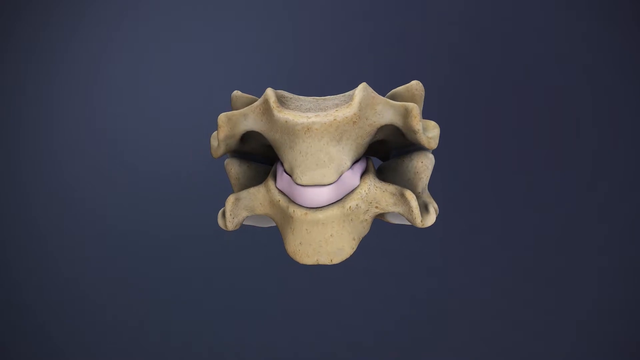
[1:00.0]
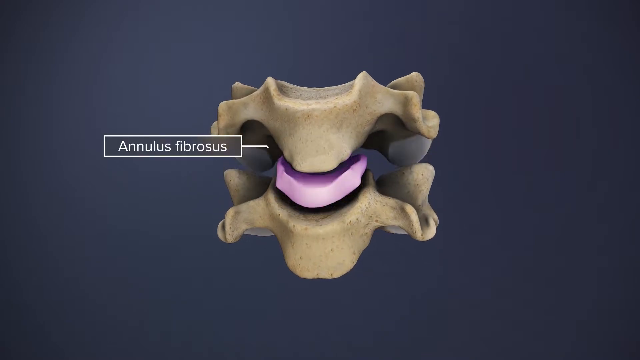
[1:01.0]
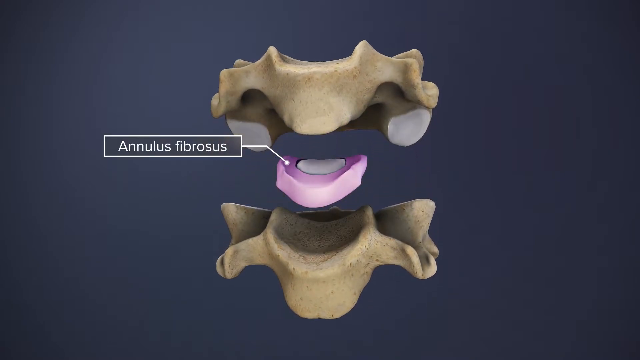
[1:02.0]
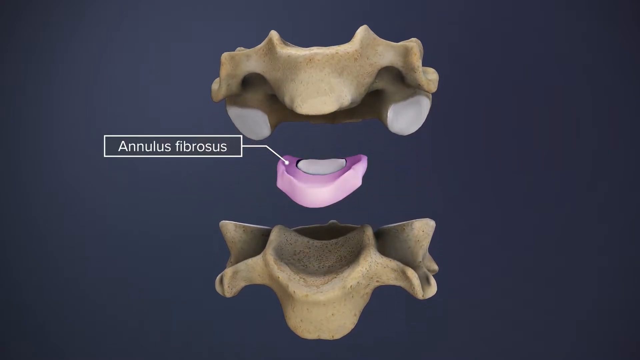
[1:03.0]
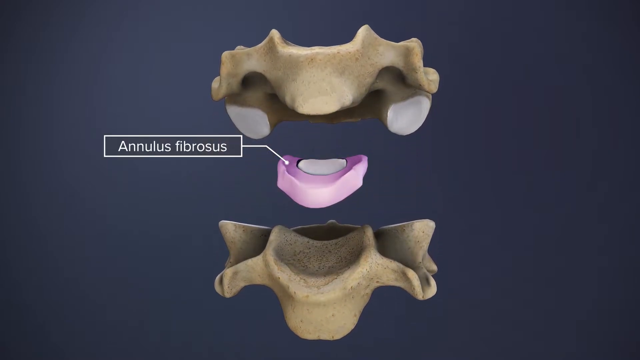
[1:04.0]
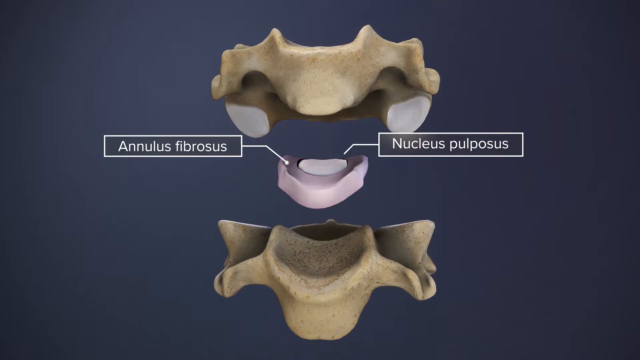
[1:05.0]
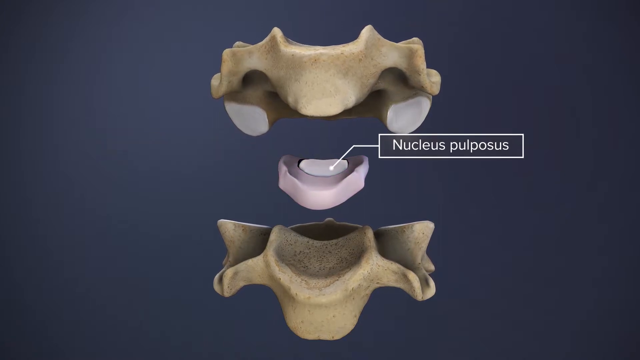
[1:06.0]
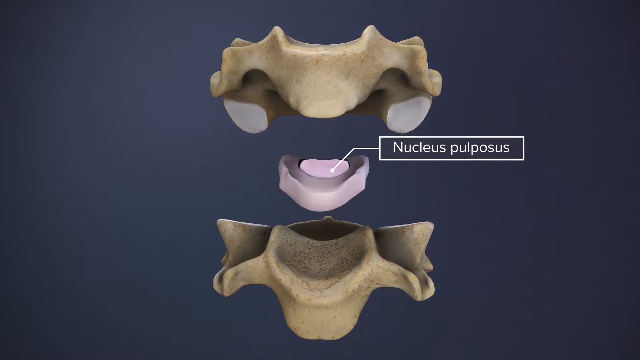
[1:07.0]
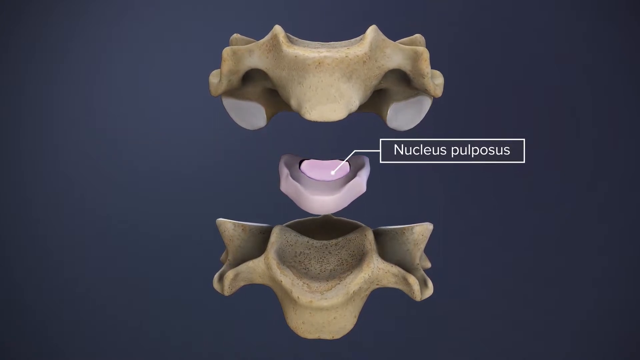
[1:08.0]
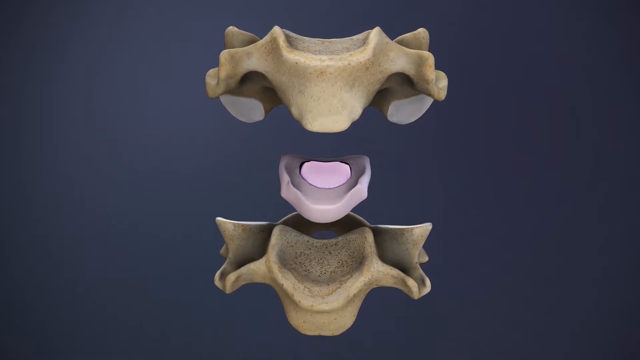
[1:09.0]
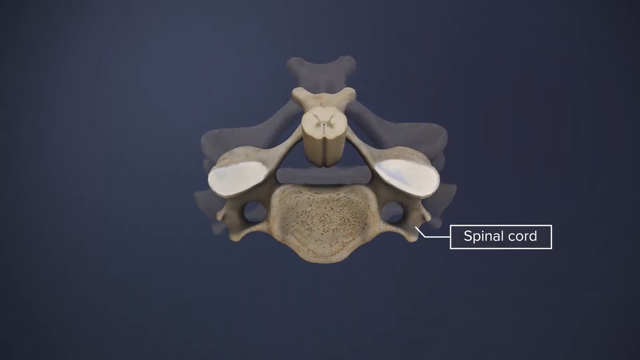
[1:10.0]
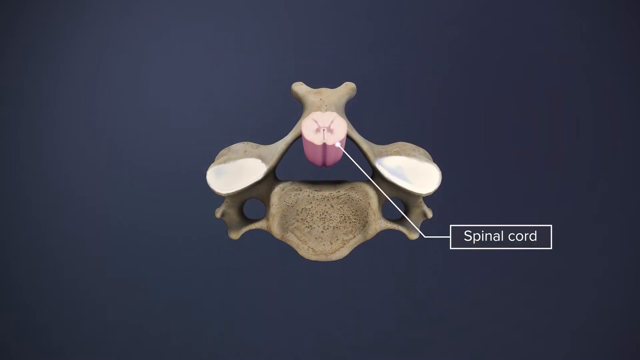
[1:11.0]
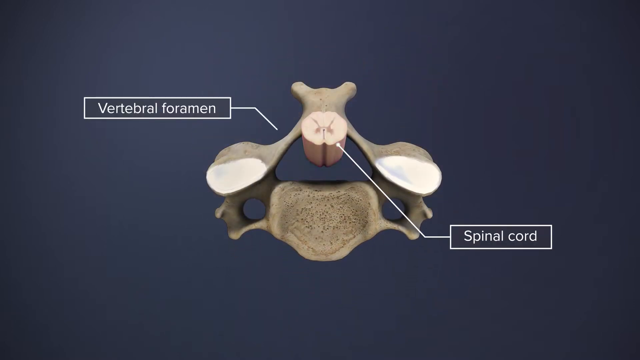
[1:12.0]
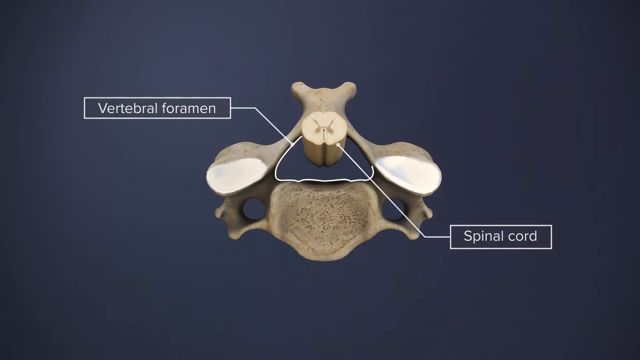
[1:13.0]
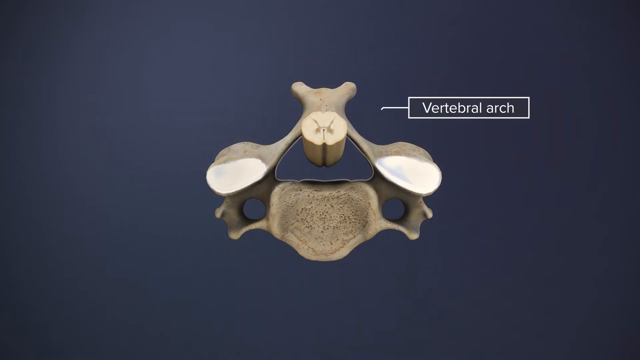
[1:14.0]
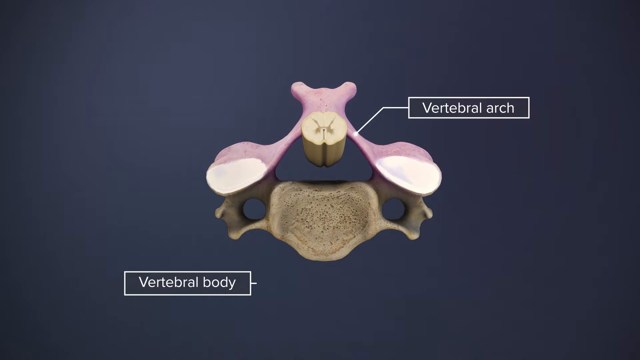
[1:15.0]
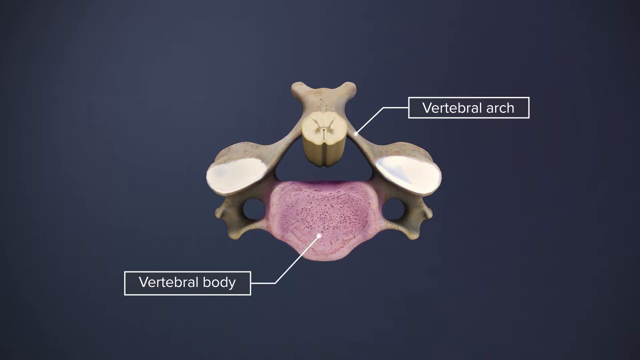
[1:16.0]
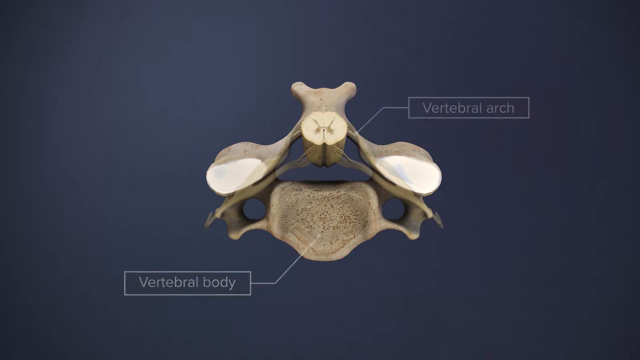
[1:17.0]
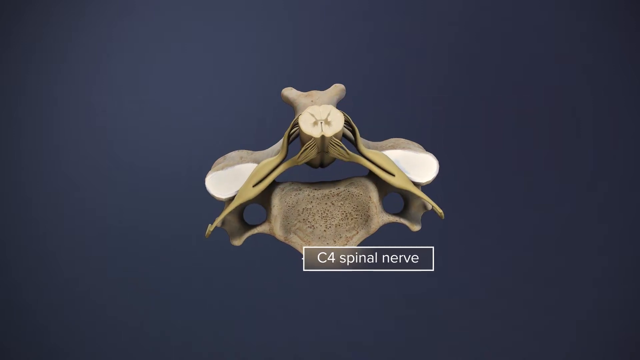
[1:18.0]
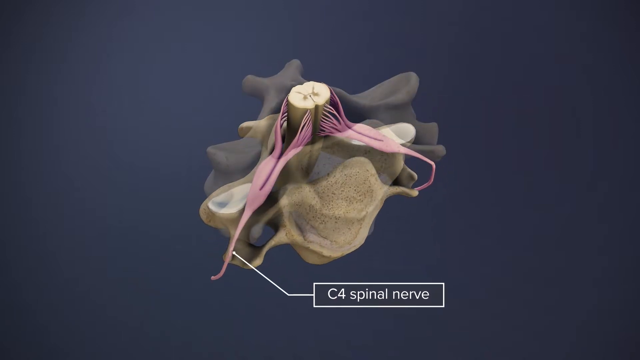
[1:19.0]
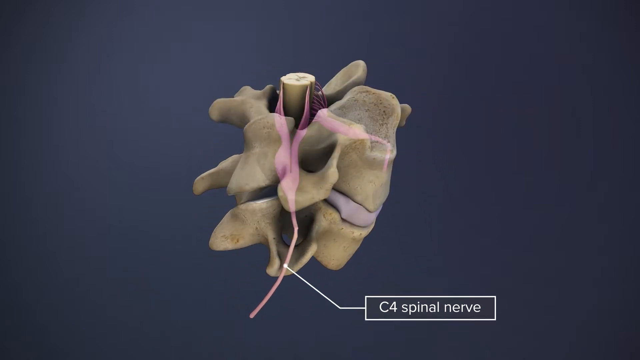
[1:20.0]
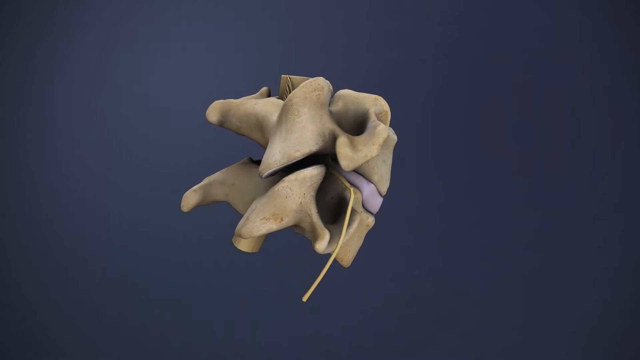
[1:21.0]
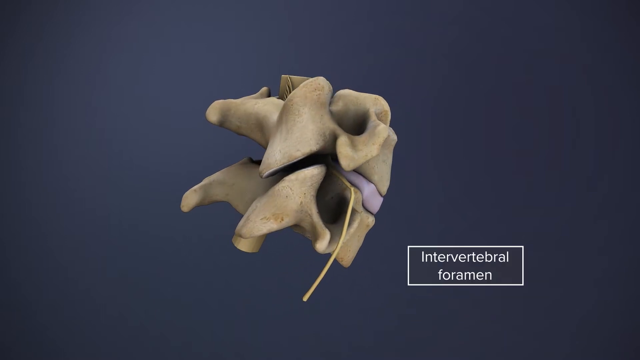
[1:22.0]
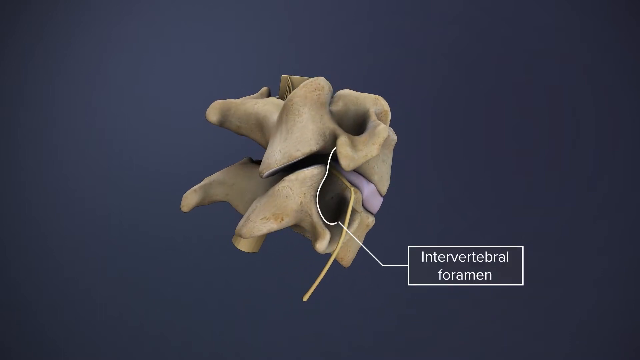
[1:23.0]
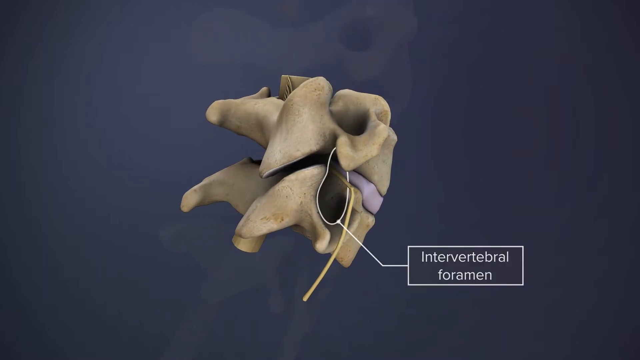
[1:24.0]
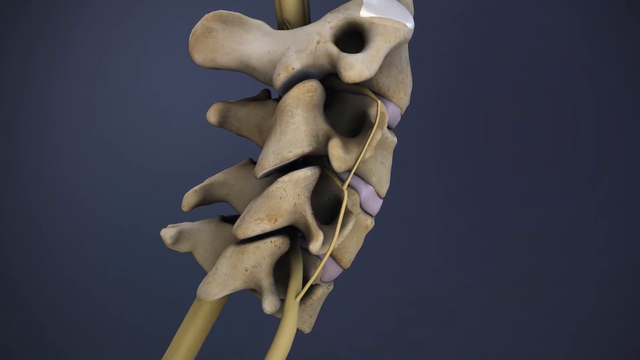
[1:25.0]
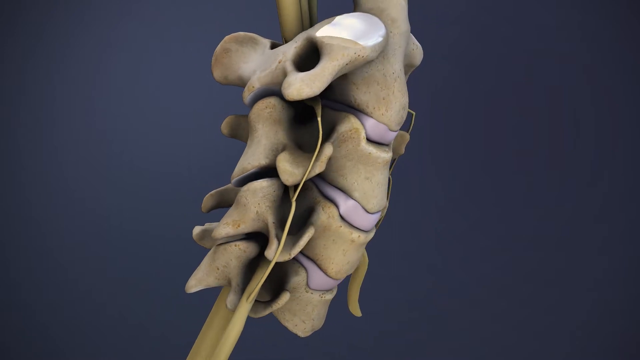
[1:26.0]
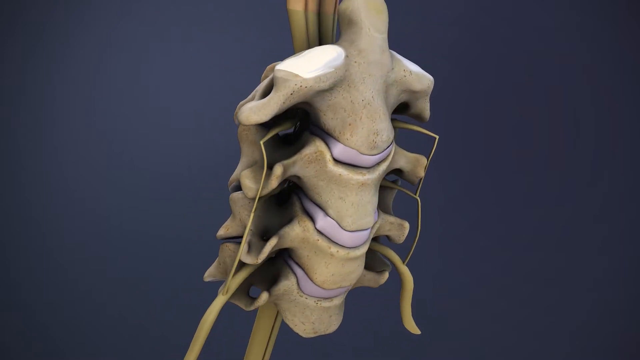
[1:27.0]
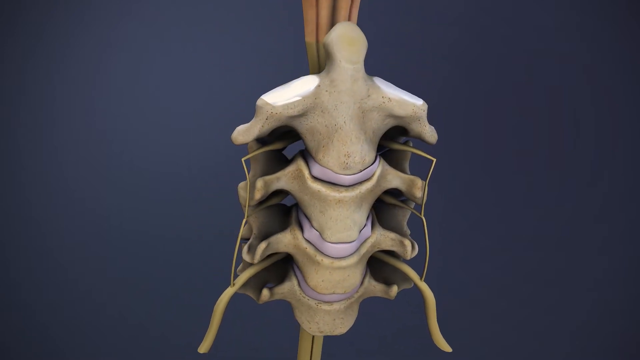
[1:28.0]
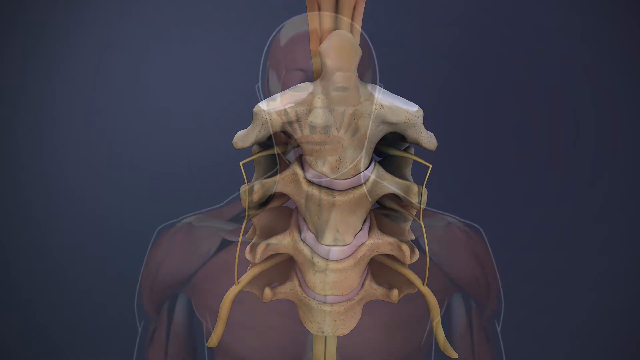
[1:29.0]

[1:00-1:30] A zoomed-in view shows two vertebrae with a small light purple piece between them. The two vertebrae come apart, one moving up and the other moving down, revealing the middle part. A label on the left side reads "annulus fibrosus" and points to the outer part of the piece. The vertebrae keep separating, the bottom one moving further down and the upper one further up. Another label forms on the right side reading "nucleus pulposus", pointing to the center, inner part of the middle piece. A different piece then appears with the spinal cord in the middle: a label on the right reads "spinal cord" and points to the middle, and a label on the left reads "vertebral foramen" and points to the outer piece of the spinal cord. Another label, "vertebrae arch", points to an upper area, and a label on the bottom left, "vertebral body", points to the lower area. The whole piece rotates to show its right side, and a label on the bottom right reads "intervertebral foramen". The scene then changes to a larger piece of the neck, showing all the vertebrae connected together.